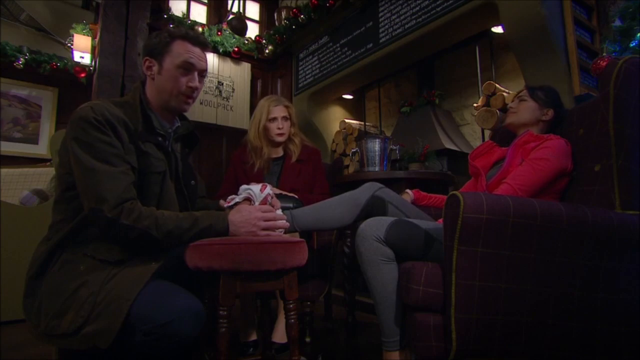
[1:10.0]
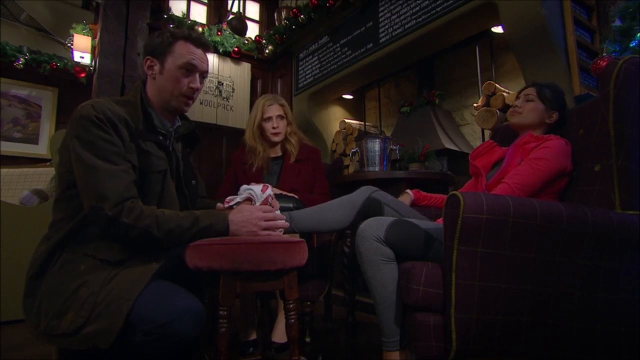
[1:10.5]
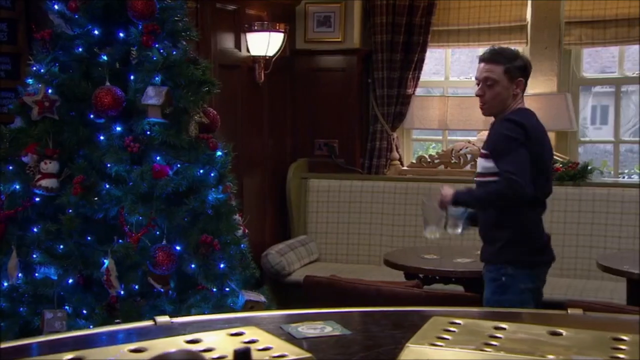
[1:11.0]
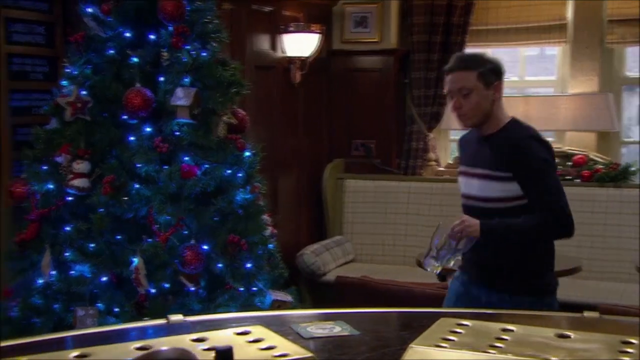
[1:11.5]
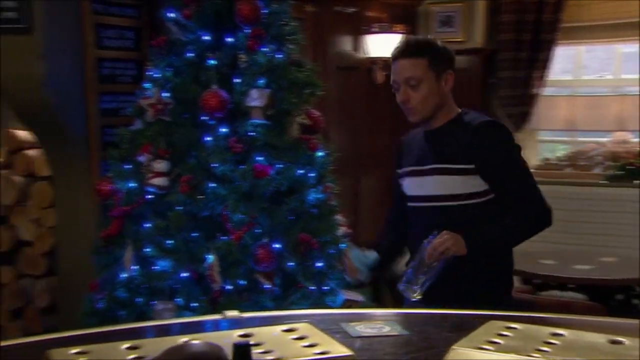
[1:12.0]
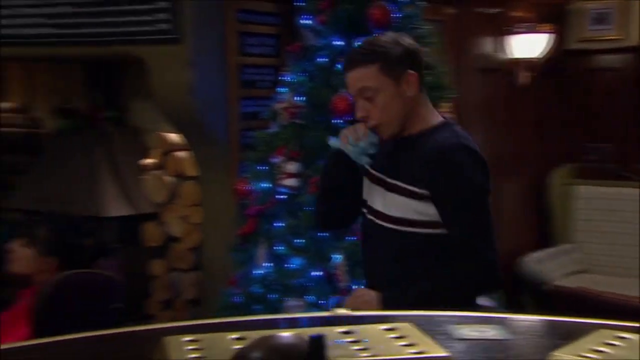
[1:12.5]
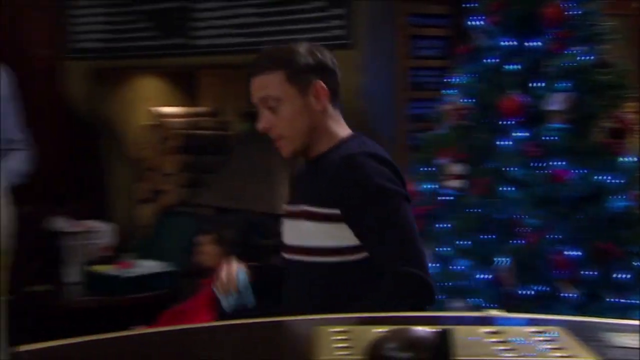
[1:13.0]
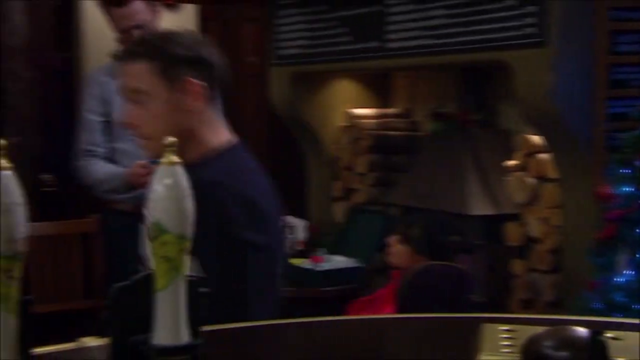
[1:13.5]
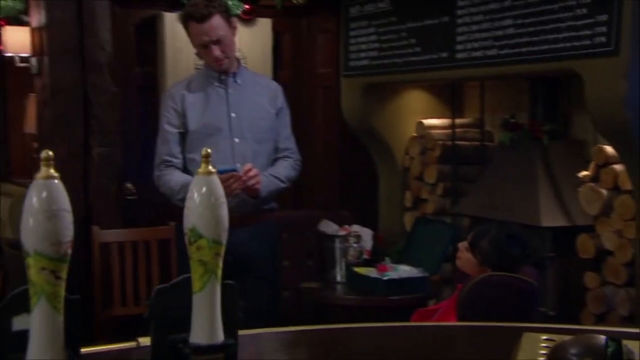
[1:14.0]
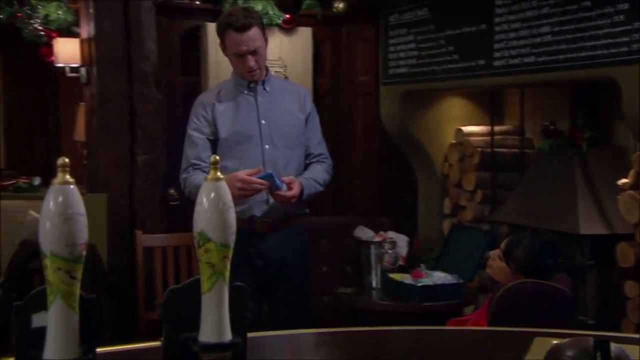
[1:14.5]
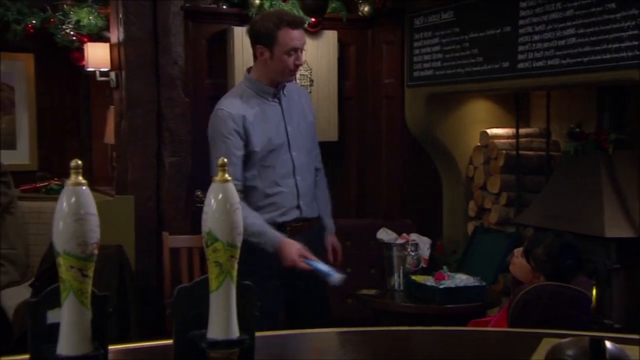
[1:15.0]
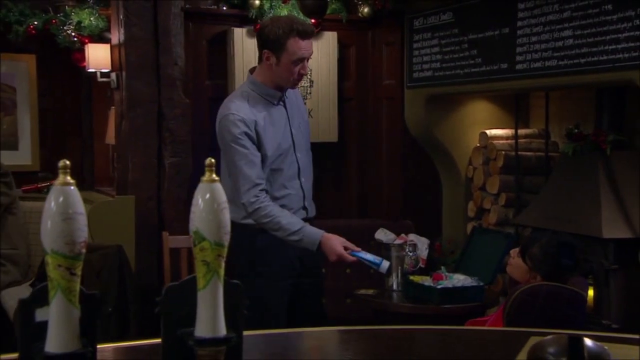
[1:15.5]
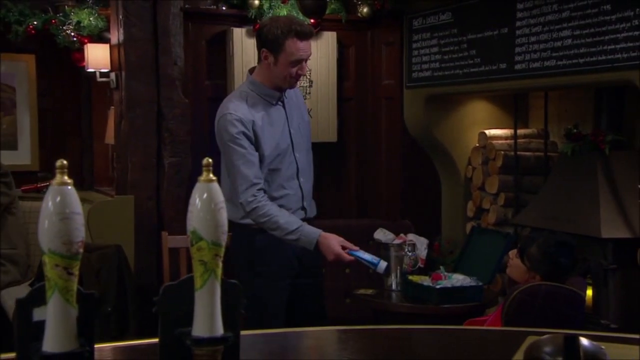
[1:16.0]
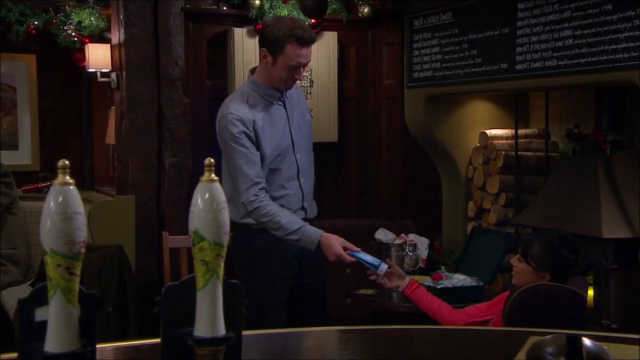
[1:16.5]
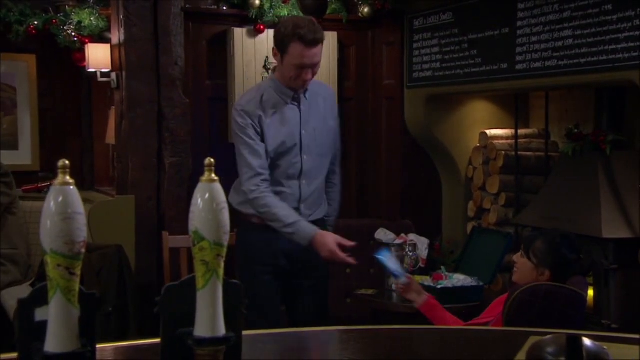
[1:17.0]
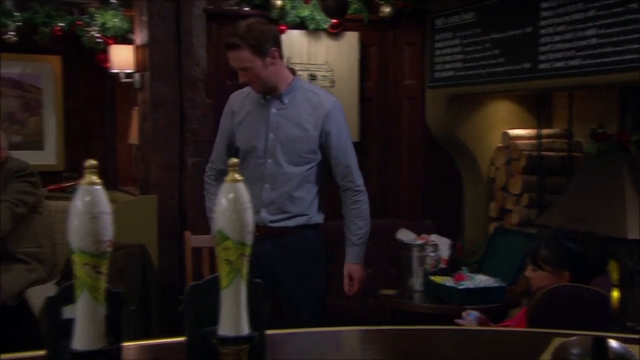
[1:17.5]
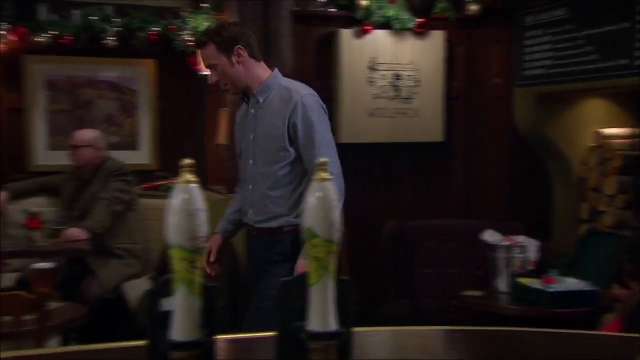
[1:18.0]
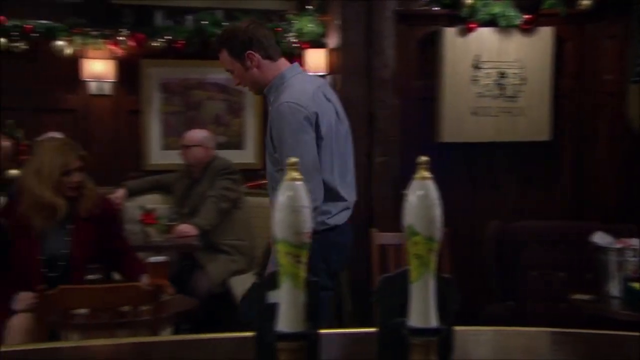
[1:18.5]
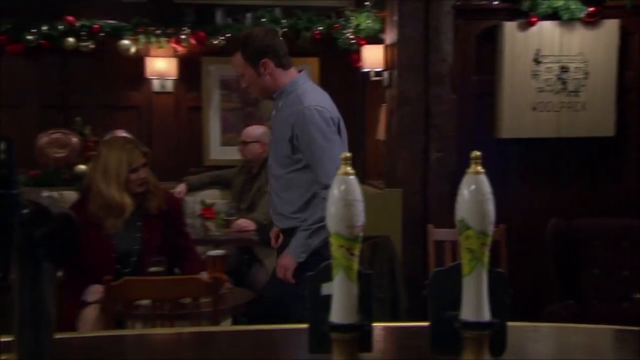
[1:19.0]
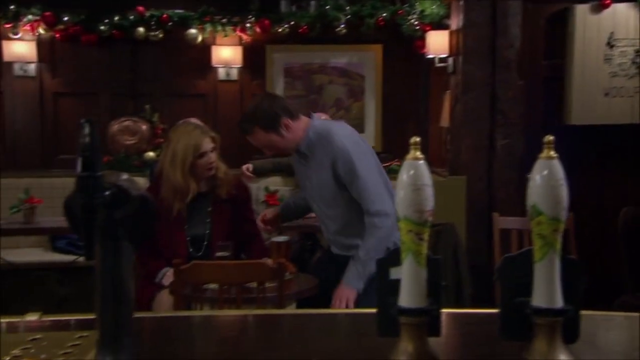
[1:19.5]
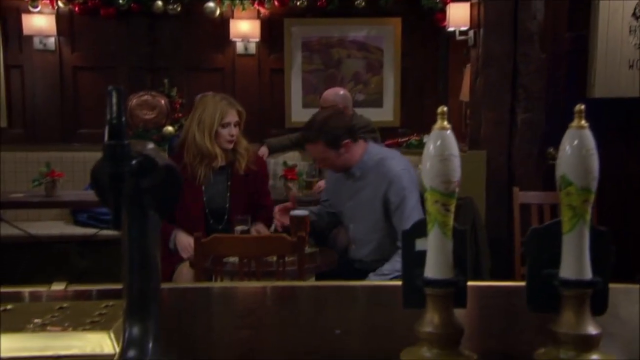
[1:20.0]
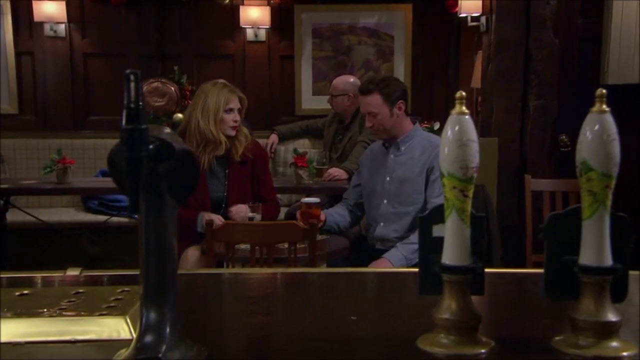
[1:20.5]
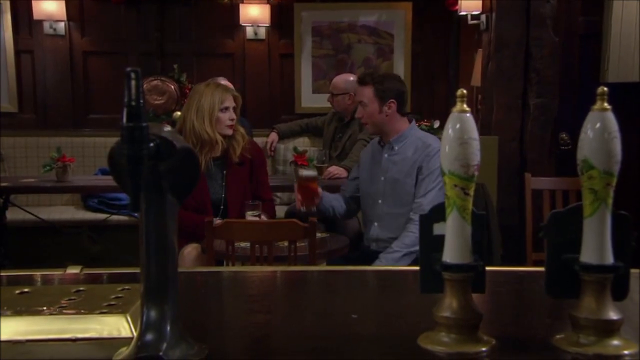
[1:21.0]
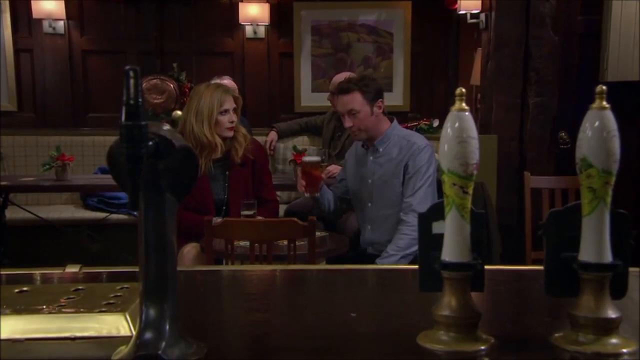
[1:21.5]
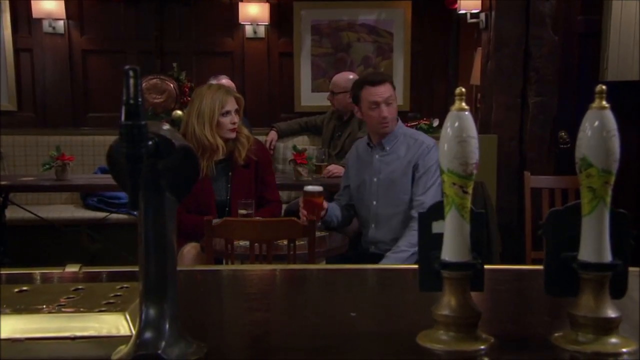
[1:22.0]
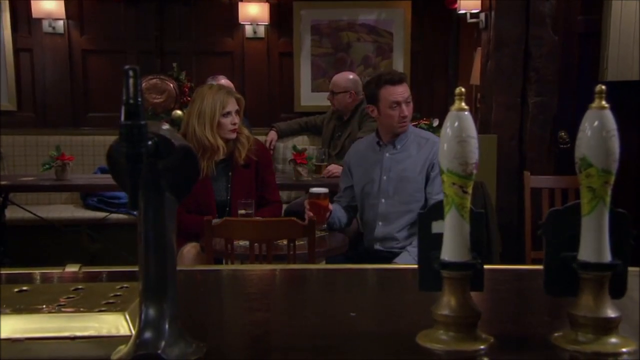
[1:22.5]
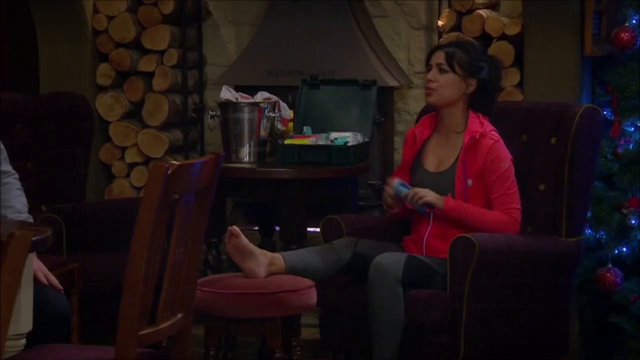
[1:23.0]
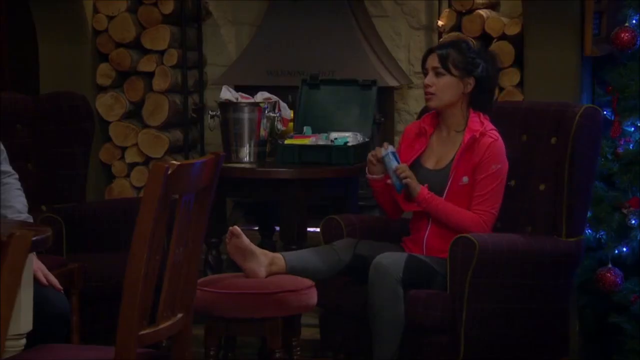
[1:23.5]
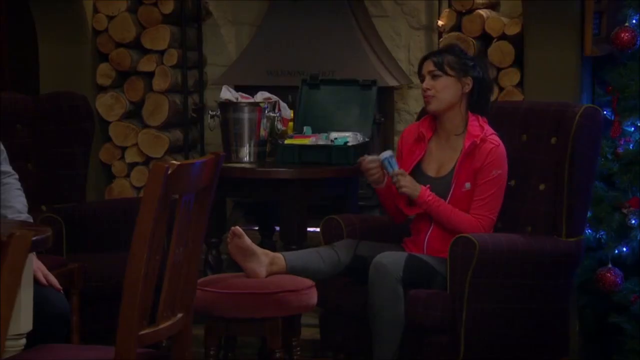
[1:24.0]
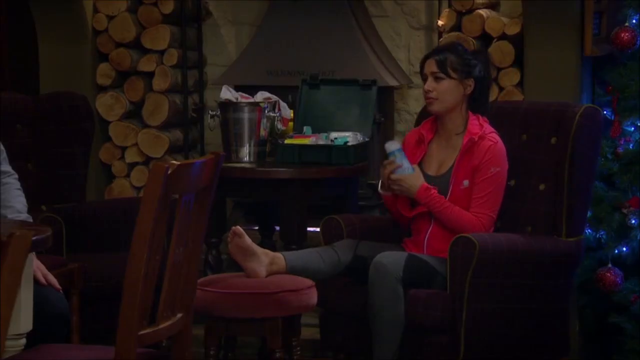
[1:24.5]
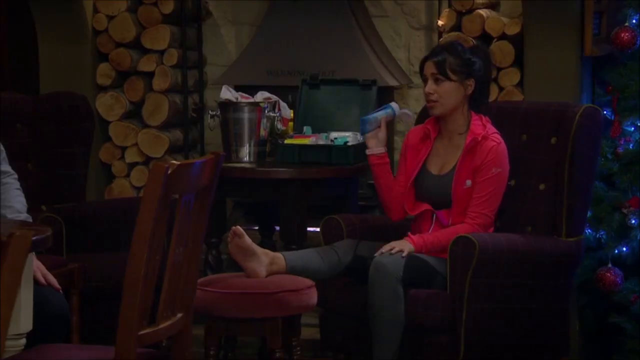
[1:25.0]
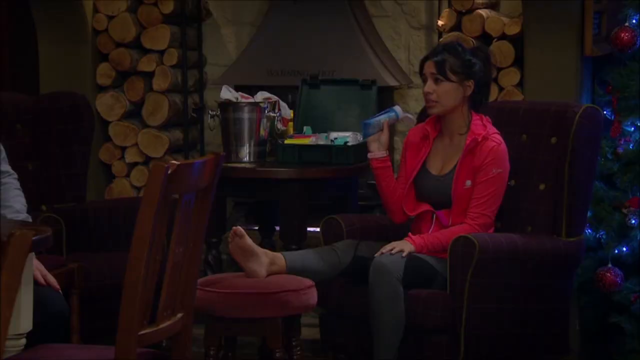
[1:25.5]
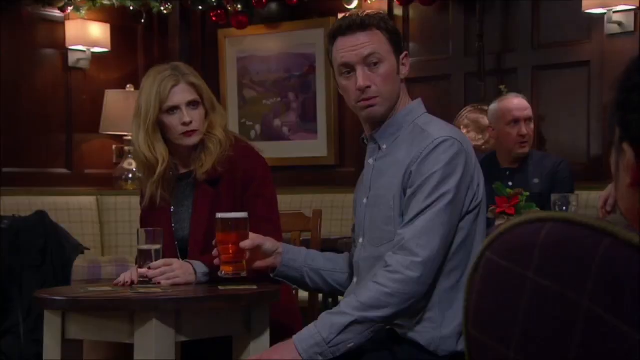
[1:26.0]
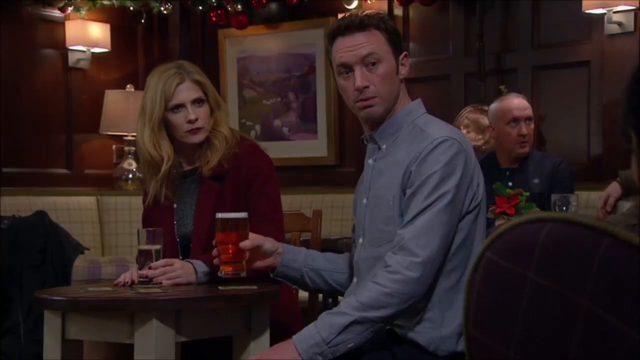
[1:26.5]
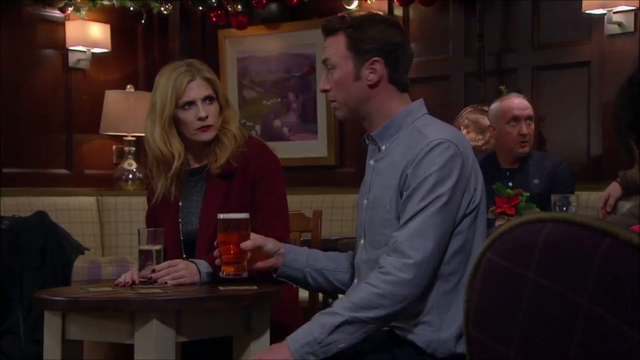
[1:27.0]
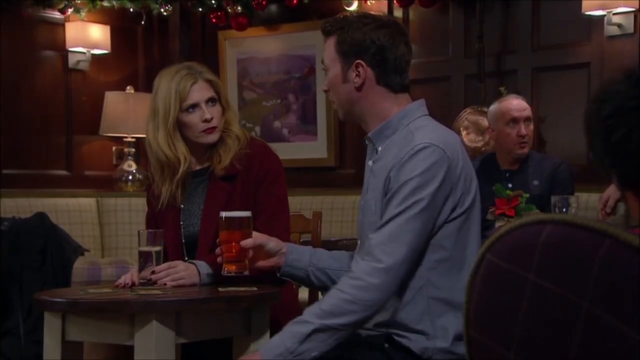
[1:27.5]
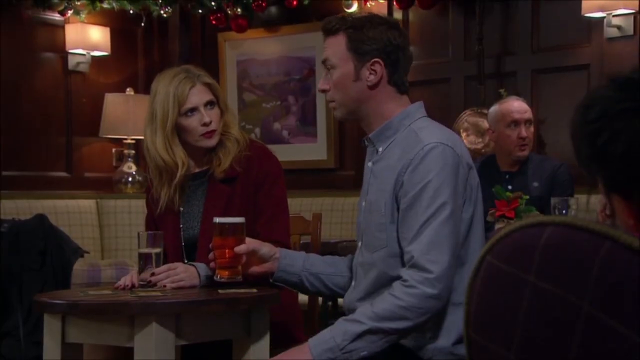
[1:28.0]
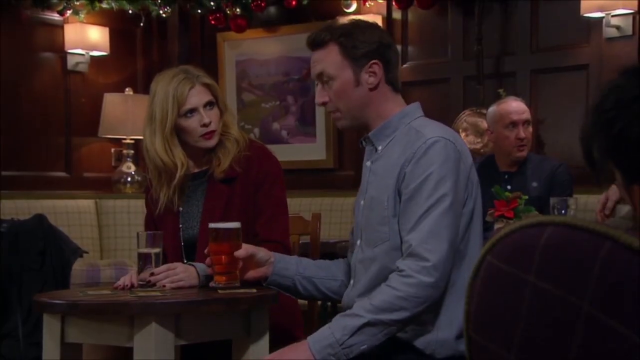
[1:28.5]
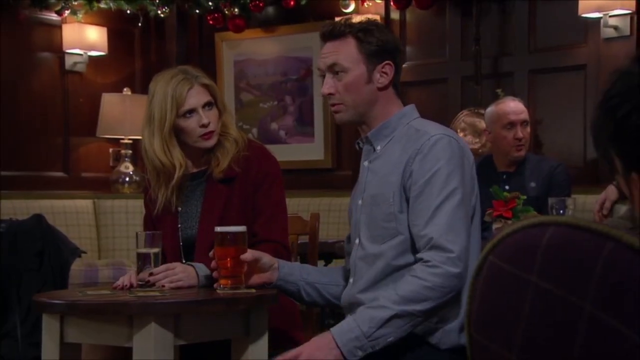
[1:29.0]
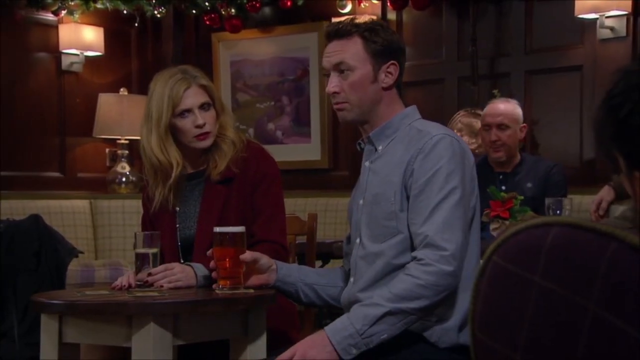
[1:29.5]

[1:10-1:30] The bar is now mostly empty, and it looks like some time has passed. A bar back, probably in his late 20s, with short cropped brown hair and a fit build, wears a black long-sleeve shirt with white and red stripes across the center; he carries two empty glasses from the tables and walks past the bar with a rag. The injured woman is with the man who helped her; he now has his jacket off and wears a bluish button-down dress shirt, all buttoned up. Things seem more relaxed, and she seems to be doing better. He hands her some kind of cream, then goes to sit down with the blonde lady at their own little table, where they have a beer. An older couple in the background is also having beer, and the bar is mostly empty. The injured woman calls out to him, opens the cream, and asks him to apply it. He seems awkward and unsure what to do, while the blonde lady, who looks like she is drinking water, is unhappy and gives him a death glare. They say something to each other, and it looks like he is going to put the beer down and go put the cream on the woman's leg.